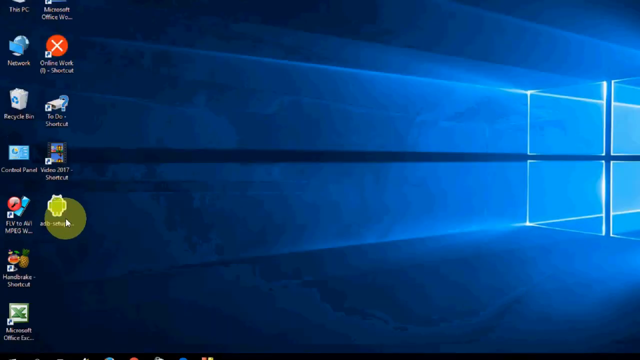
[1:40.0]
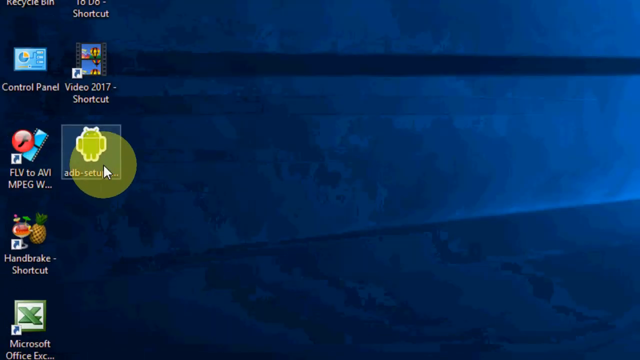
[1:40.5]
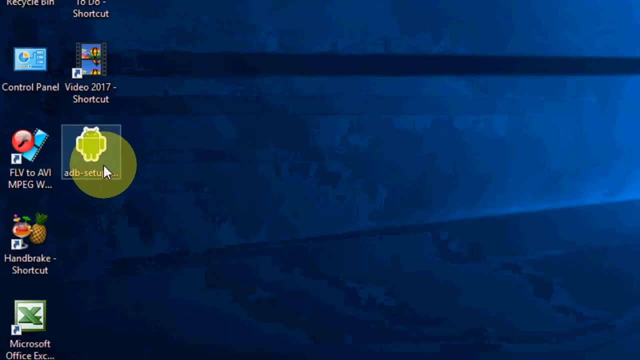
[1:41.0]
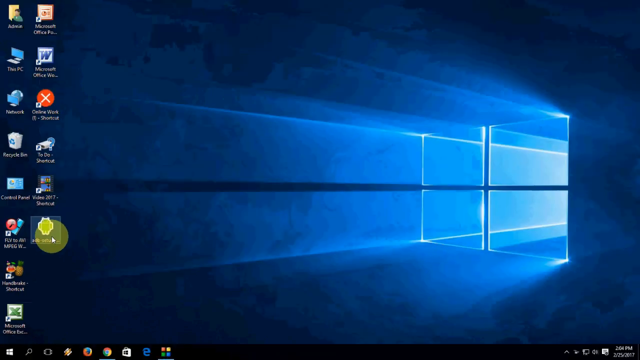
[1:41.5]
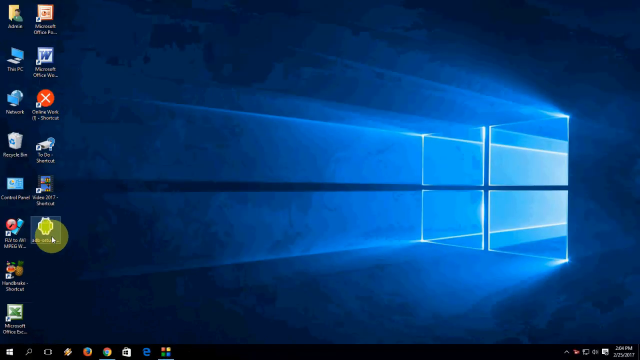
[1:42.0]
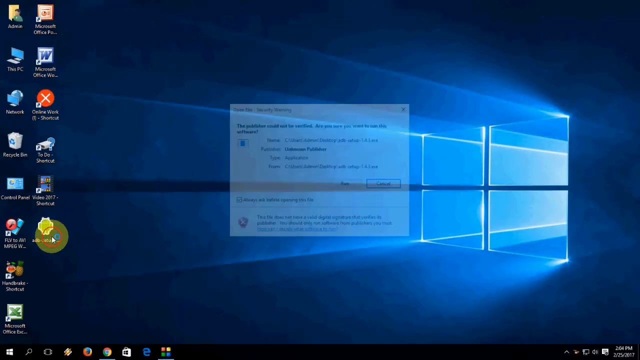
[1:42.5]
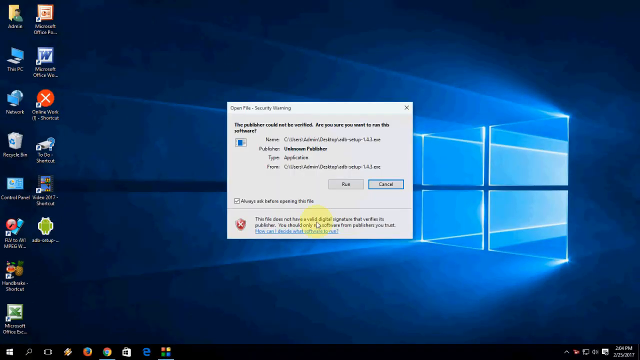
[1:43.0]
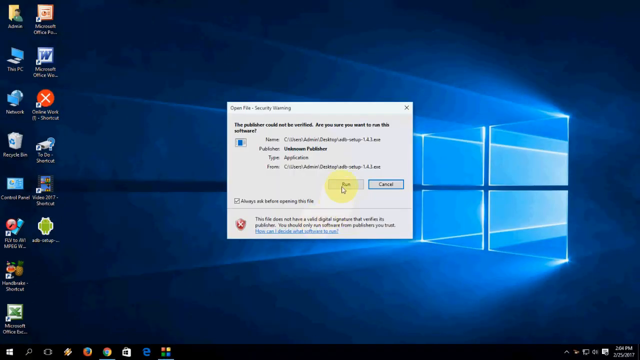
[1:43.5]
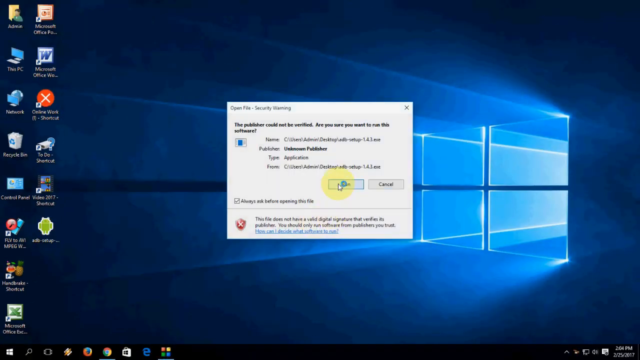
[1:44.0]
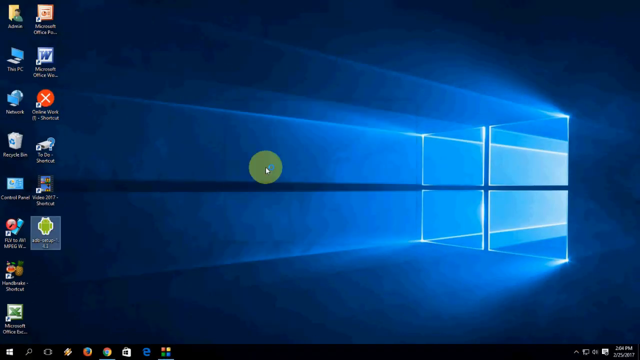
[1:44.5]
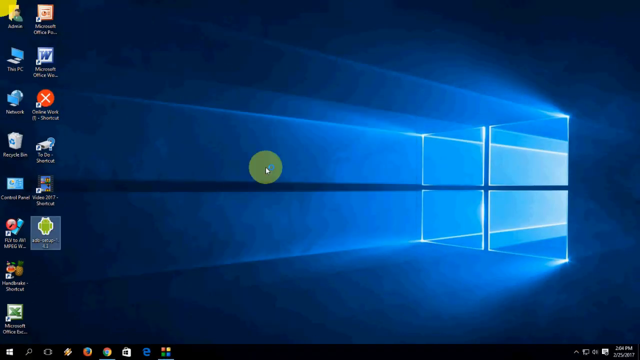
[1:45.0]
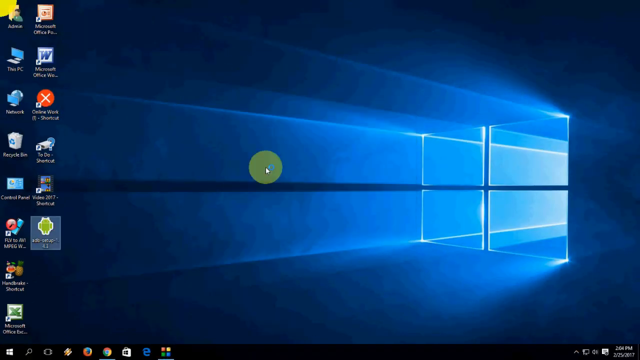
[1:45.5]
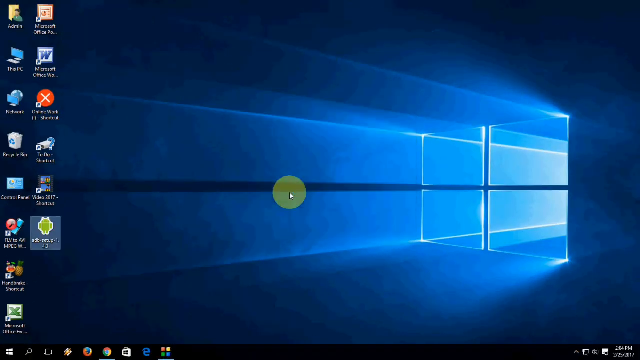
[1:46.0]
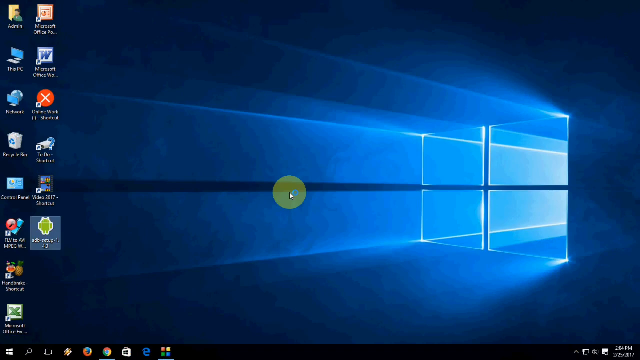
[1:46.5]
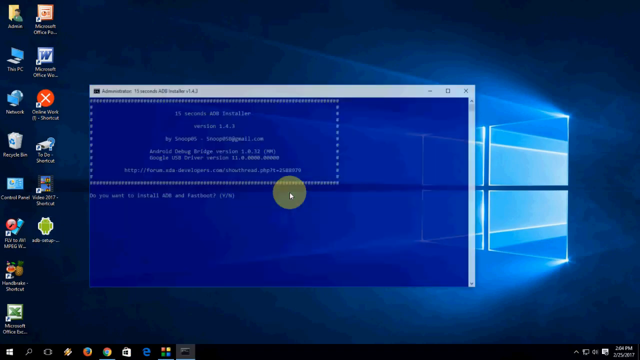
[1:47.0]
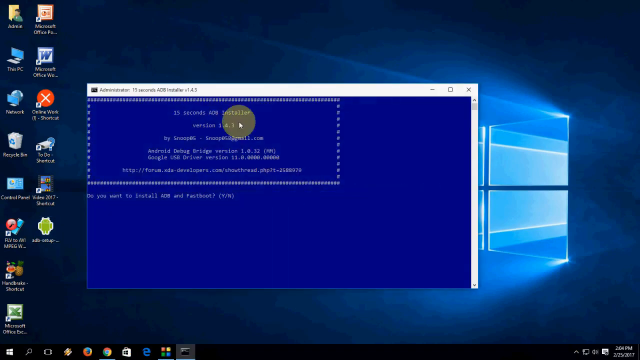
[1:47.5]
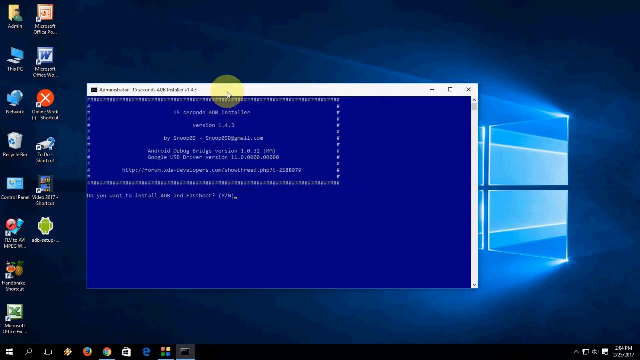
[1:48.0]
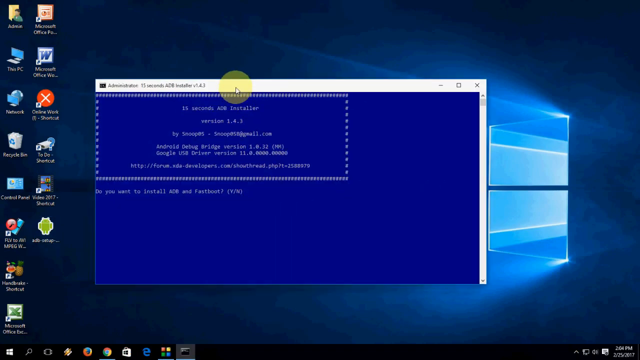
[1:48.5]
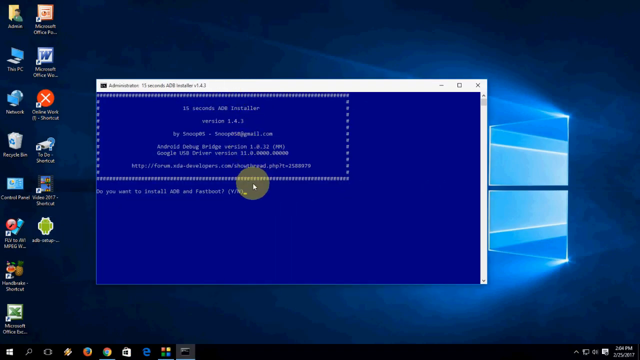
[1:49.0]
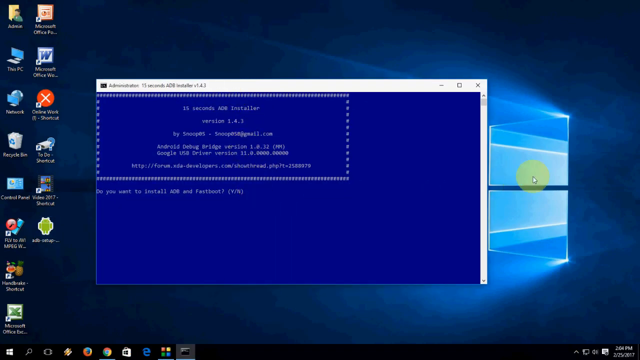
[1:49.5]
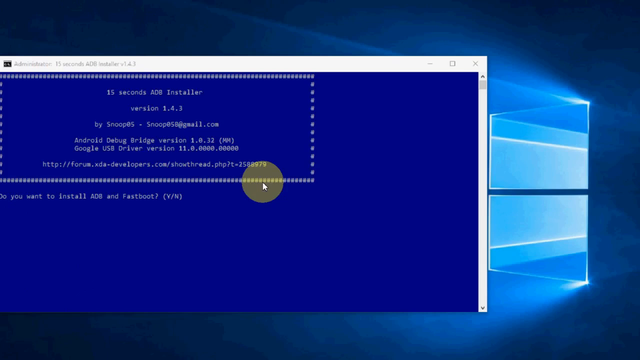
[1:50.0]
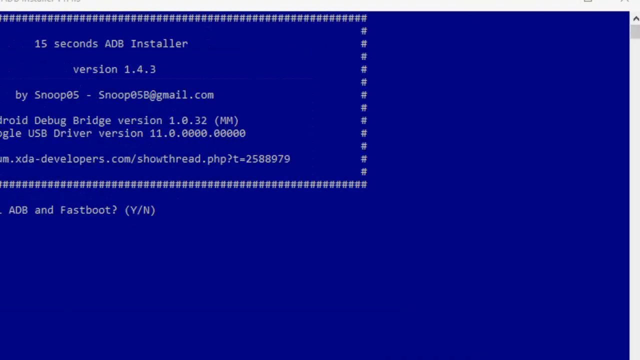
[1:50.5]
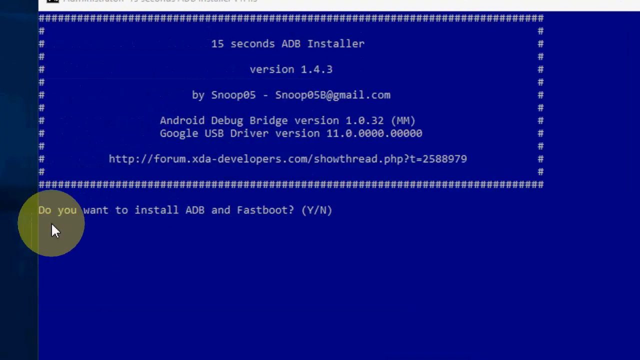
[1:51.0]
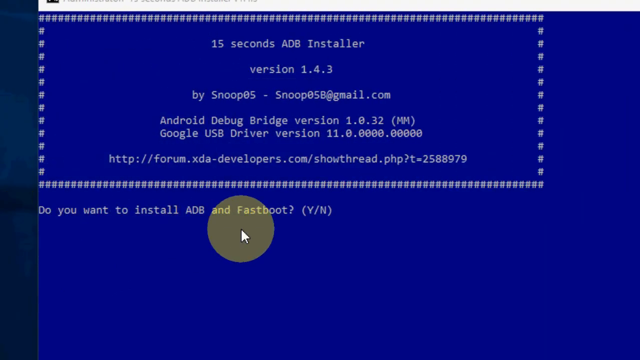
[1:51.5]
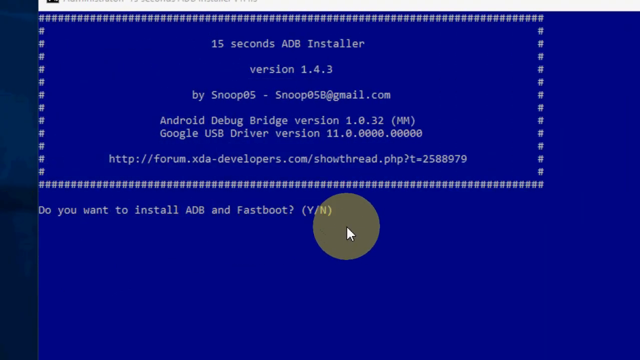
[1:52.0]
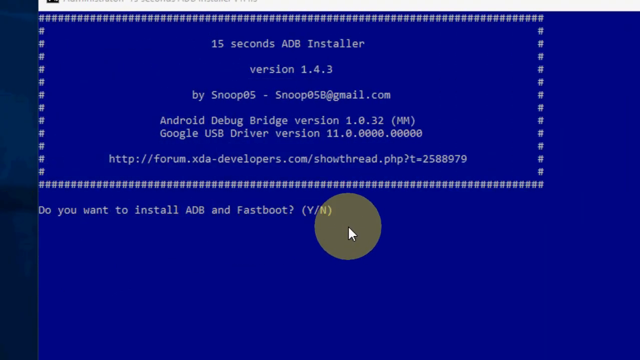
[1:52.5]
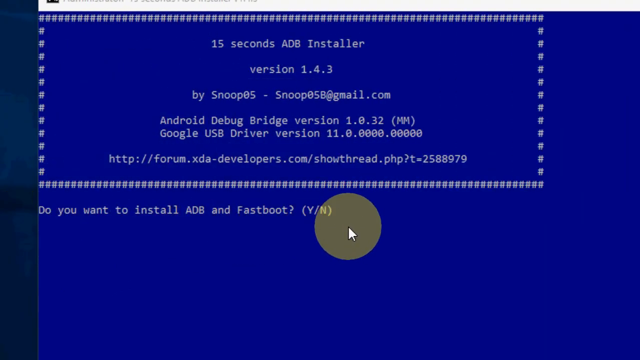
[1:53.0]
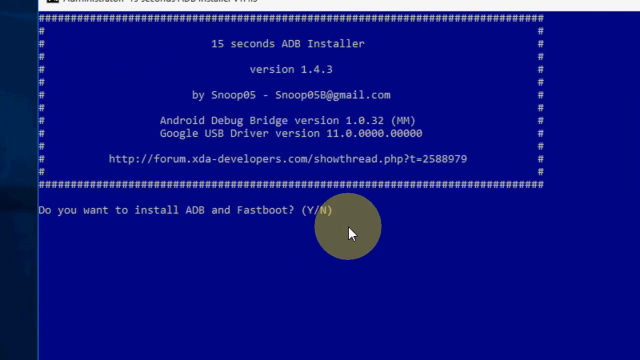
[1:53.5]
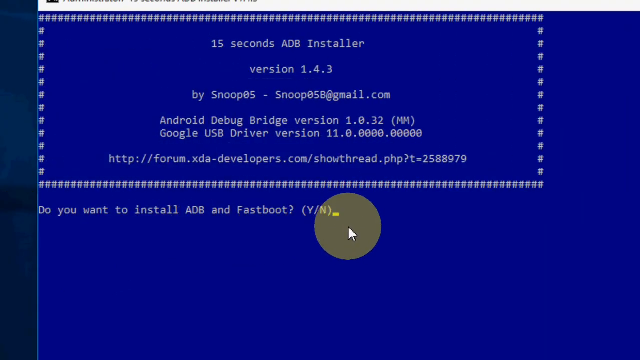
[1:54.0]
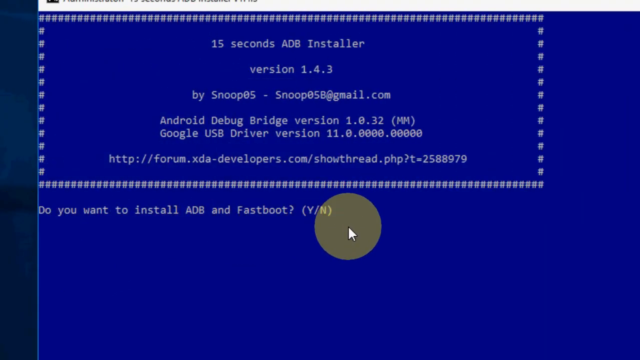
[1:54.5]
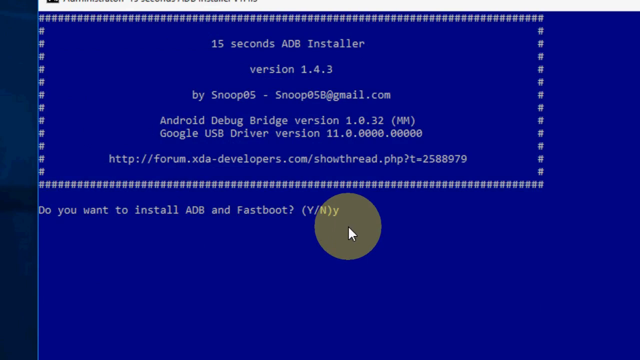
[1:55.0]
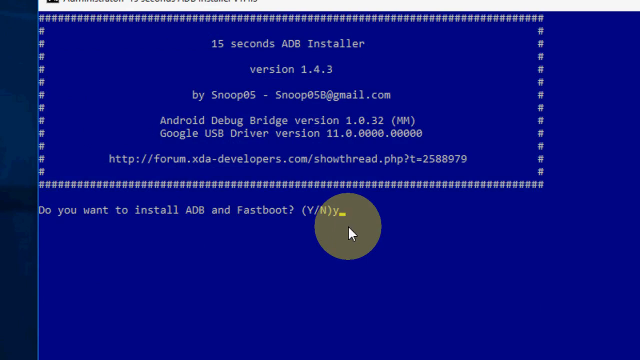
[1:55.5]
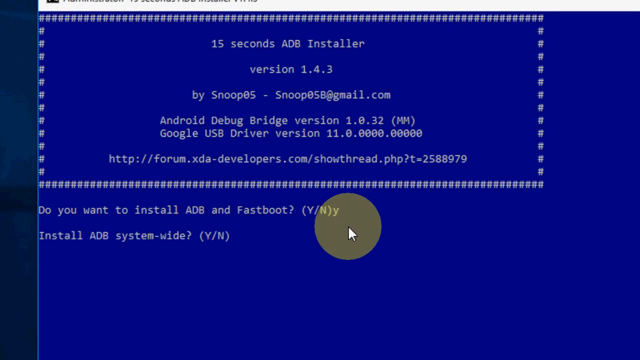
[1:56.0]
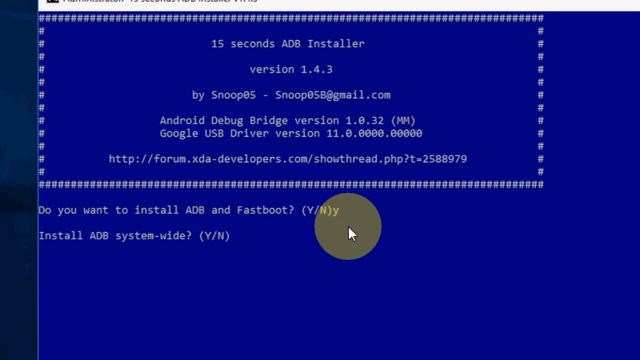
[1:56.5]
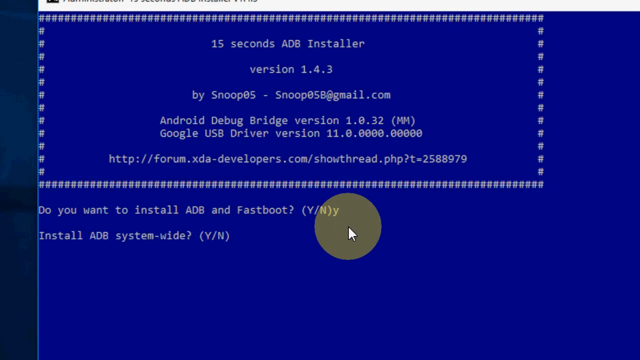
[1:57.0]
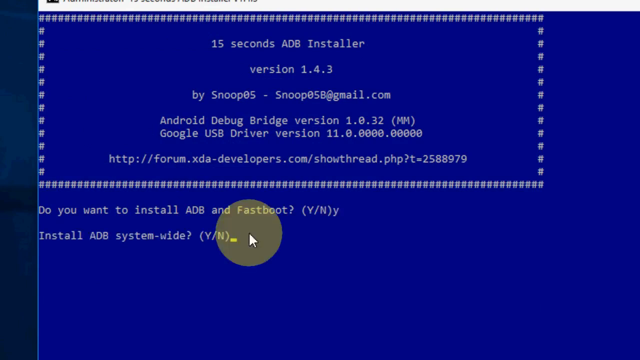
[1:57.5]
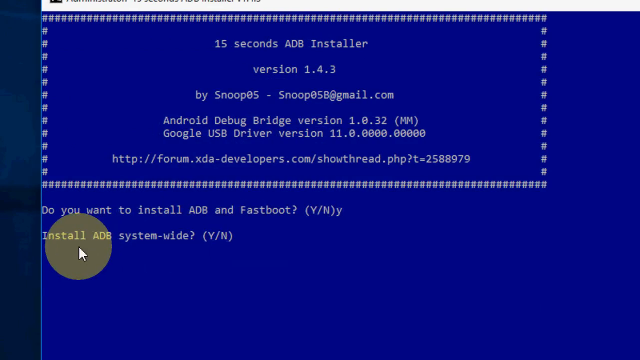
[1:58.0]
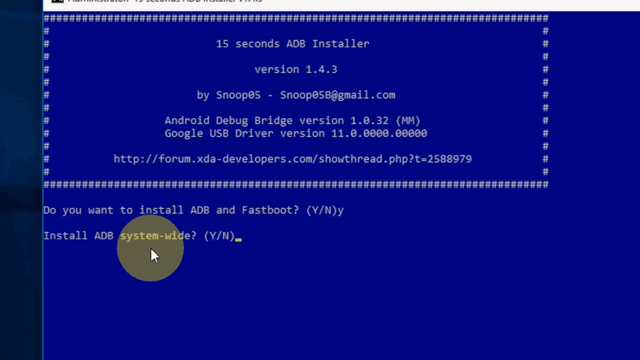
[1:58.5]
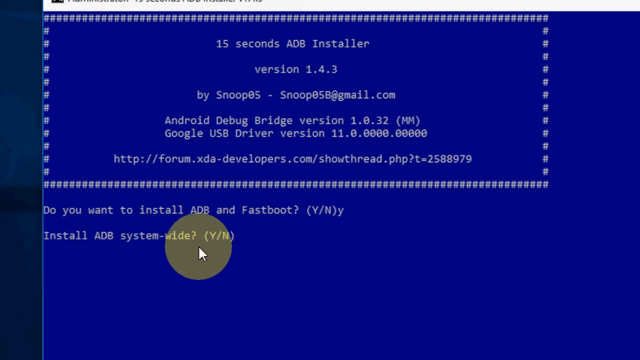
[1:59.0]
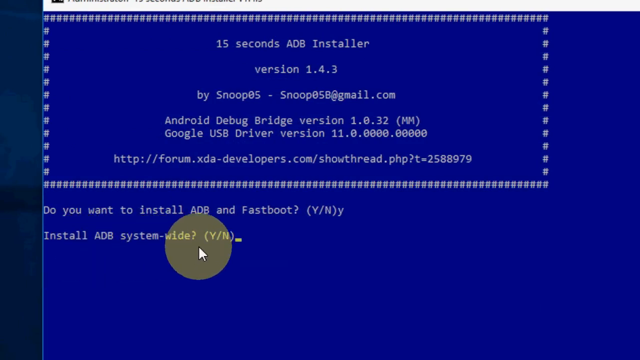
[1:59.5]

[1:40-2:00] The newly downloaded ADB installer utility appears as a green icon, and the person clicks on it to begin installation. A Windows security window pops up asking the user to confirm the installation. After the person clicks the confirming button, the ADB installer utility appears: a fairly large blue window with white text displaying the installer's title, version and maker. A text question asks whether to install the software with a yes or no option, and the person enters Y. A second line then appears, offering to install the software with a yes or no option.